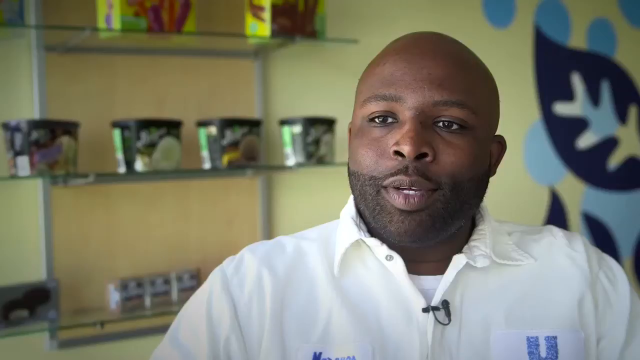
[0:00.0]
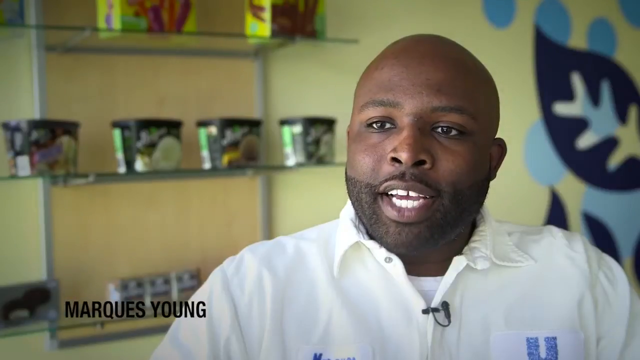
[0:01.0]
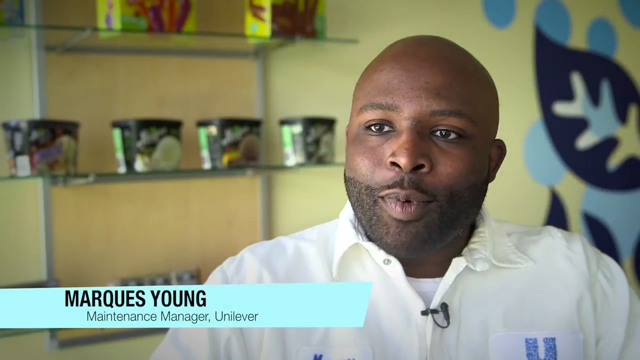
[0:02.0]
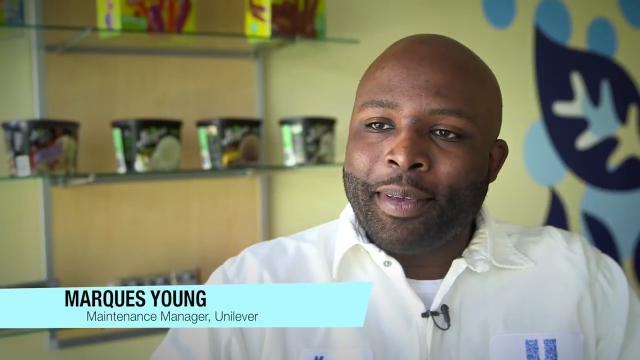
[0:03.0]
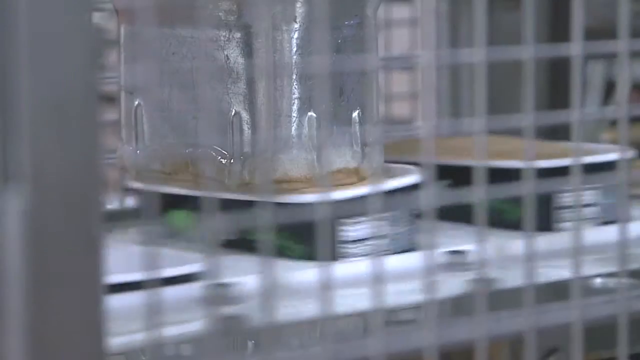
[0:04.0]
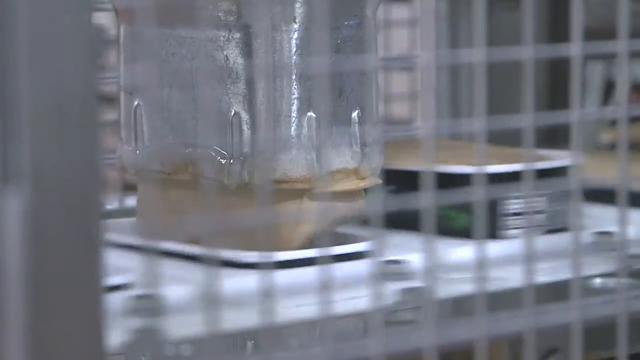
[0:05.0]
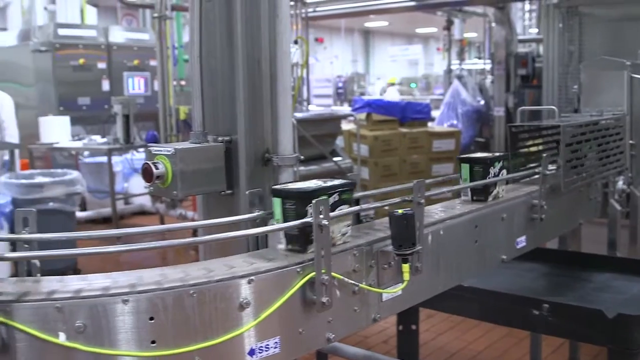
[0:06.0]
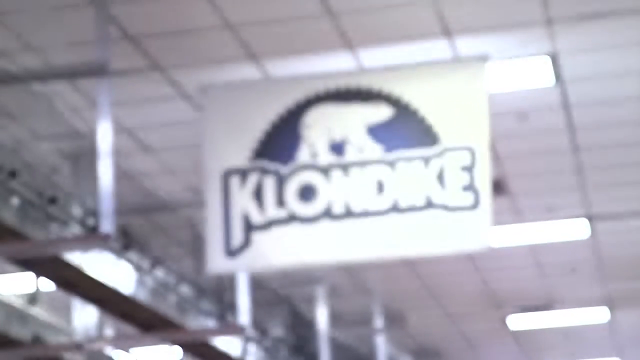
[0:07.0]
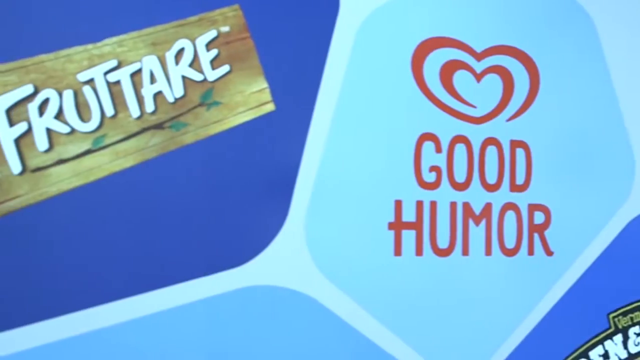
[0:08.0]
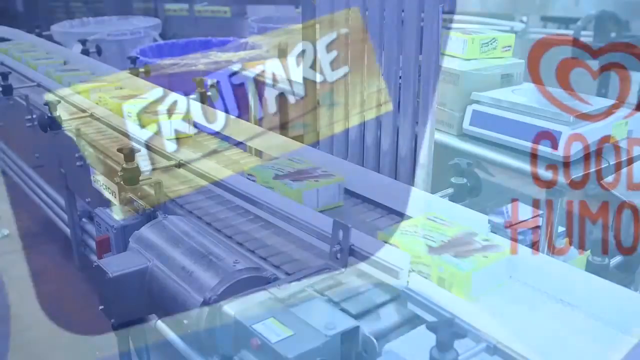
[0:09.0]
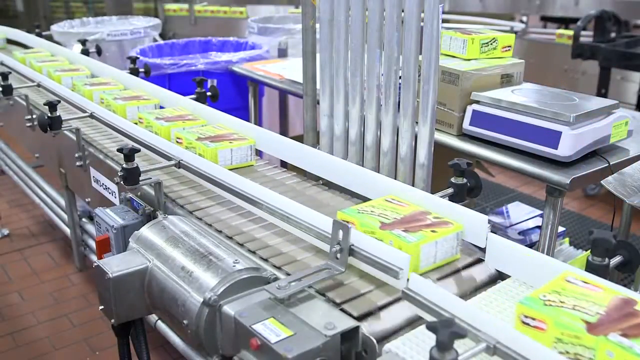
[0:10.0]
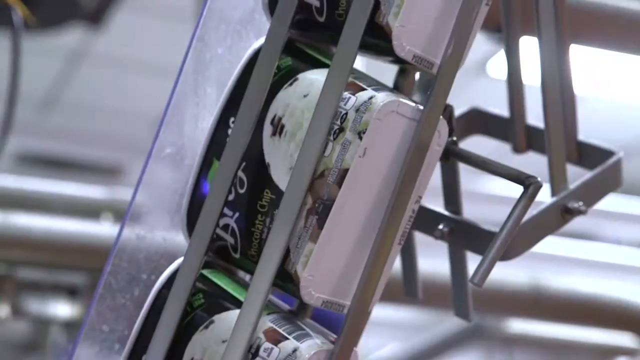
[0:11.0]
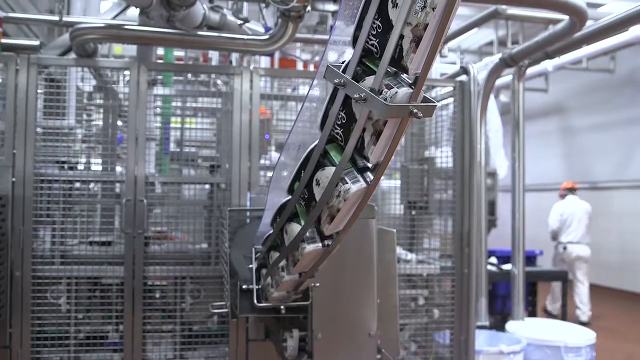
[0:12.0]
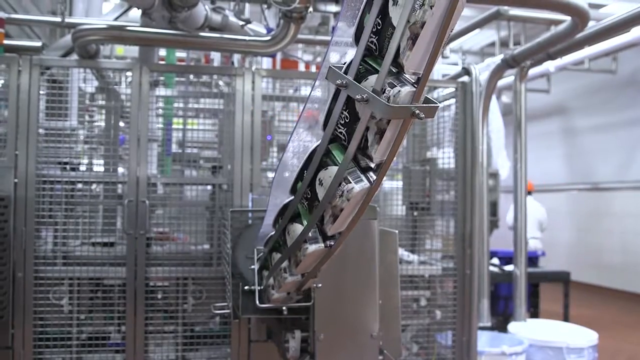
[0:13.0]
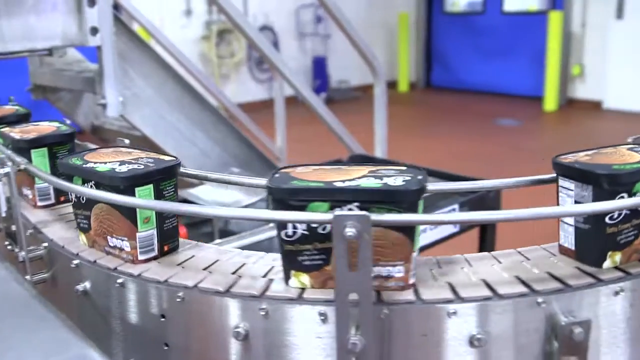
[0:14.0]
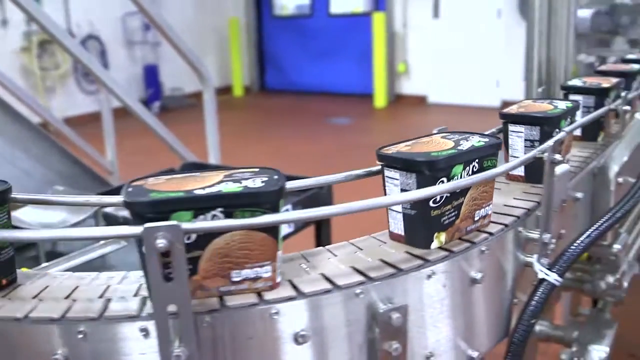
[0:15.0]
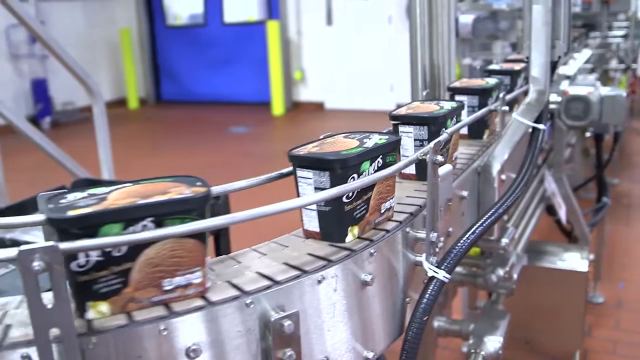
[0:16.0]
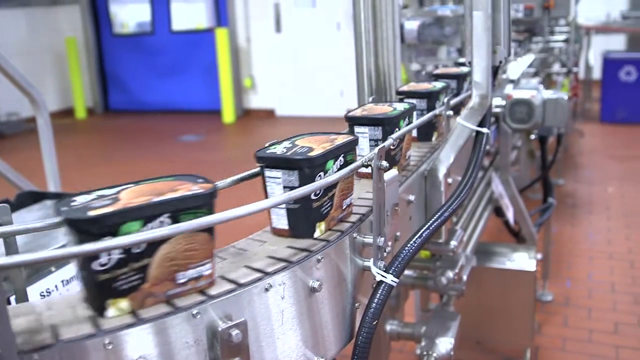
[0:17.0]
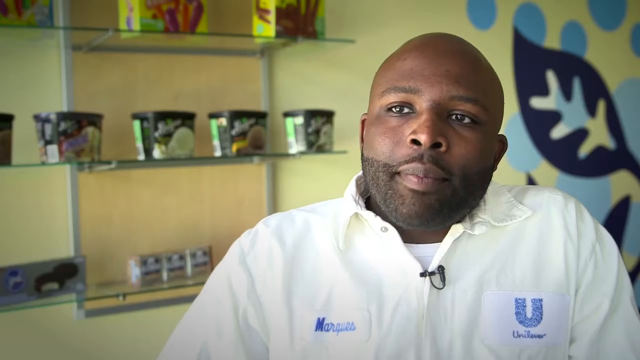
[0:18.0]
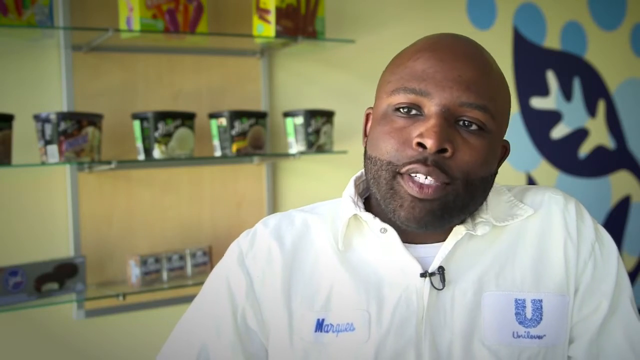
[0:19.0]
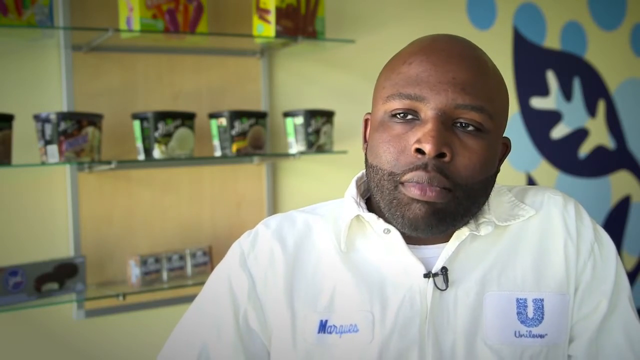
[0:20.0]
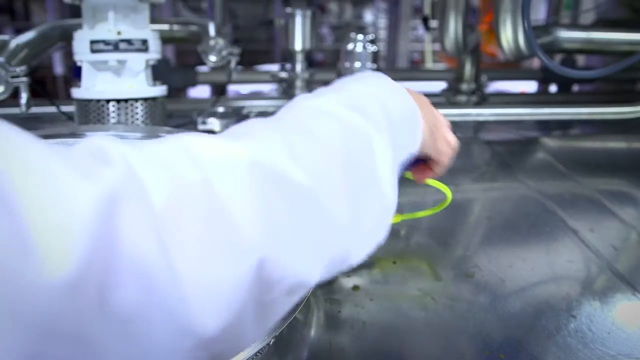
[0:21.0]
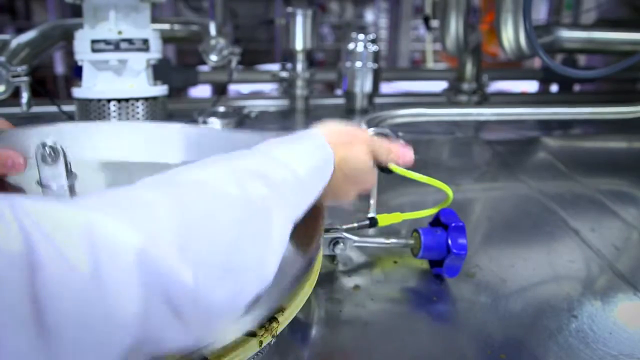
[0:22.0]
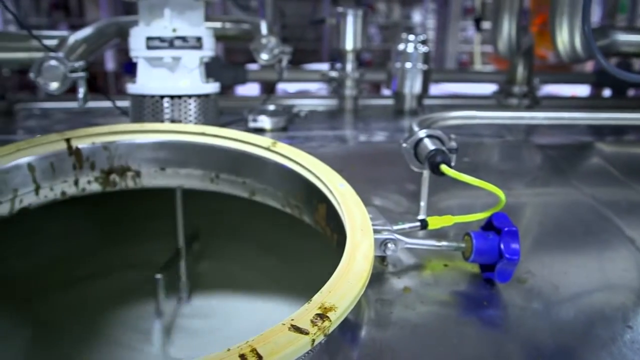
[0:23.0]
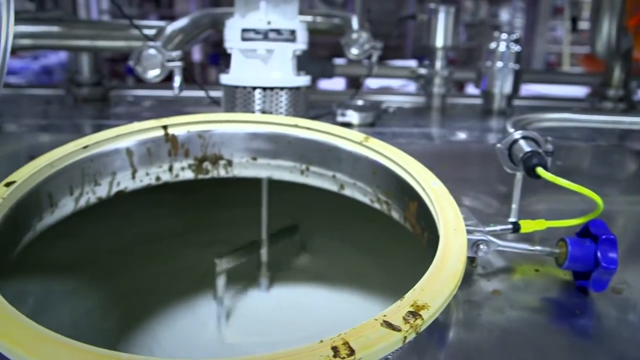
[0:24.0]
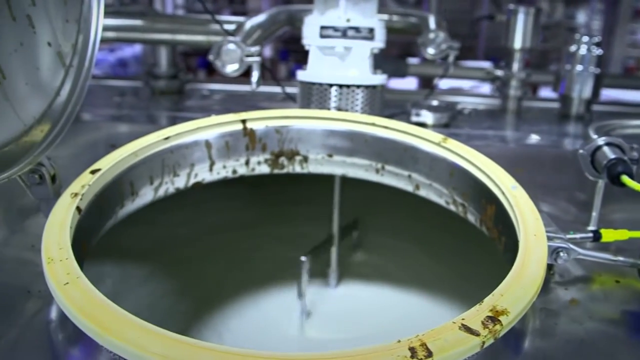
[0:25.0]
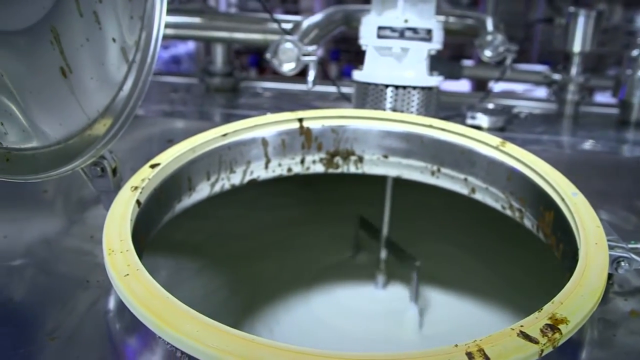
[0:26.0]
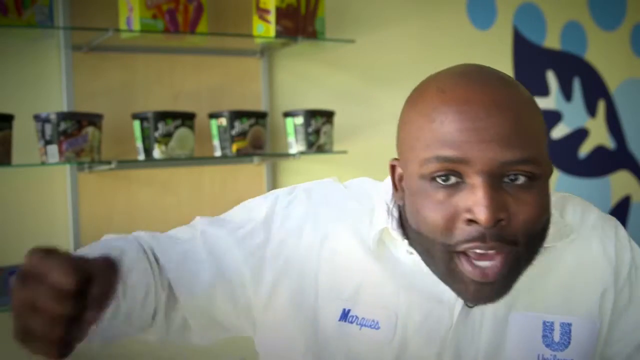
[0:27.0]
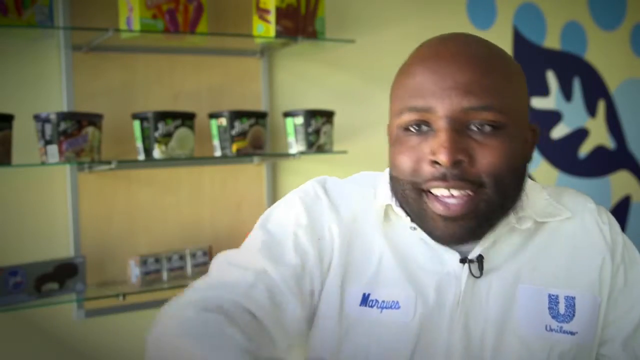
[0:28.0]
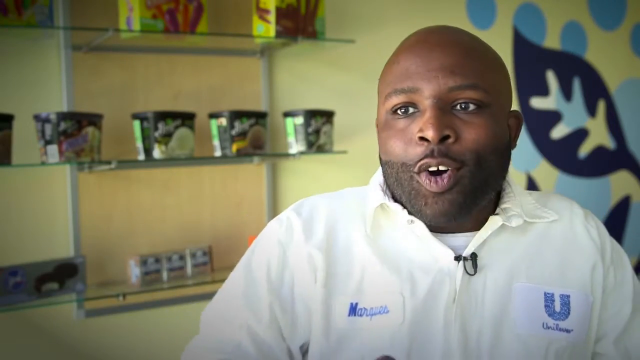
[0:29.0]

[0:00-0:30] The setting appears to be an ice cream shop. A bald African-American man with stubble, wearing a white collared shirt, looks happy. Breyers ice cream is in the background, with four tubs or tubes of ice cream visible. The shop appears to be a very lime green color with blue and light blue floral design patterns. The man is introduced as Marcus Young, maintenance manager at Unilever. Several Breyers ice cream tubes are then pushed out. A transition moves to a factory showing the ice cream being shipped and packaged. Much of the machinery appears to be metallic and is silver in color. As the ice creams move around the conveyor belt, they are separated by at least three feet. The camera zooms in on the Klondike logo with the white polar bear on top of it. Good Humor and fruitware type brands are also visible.